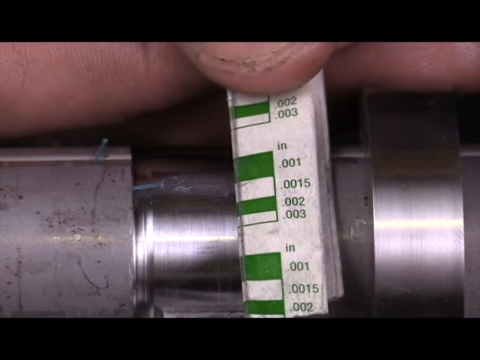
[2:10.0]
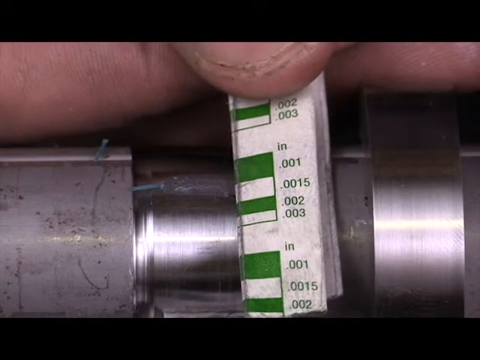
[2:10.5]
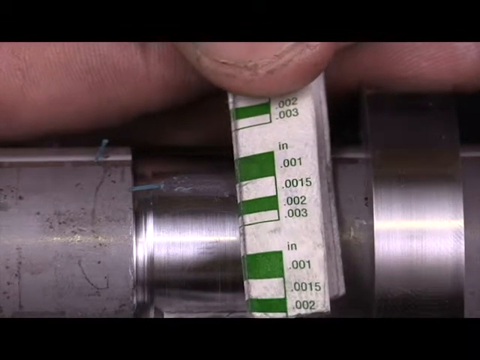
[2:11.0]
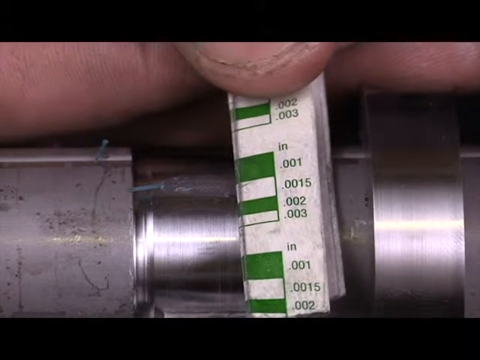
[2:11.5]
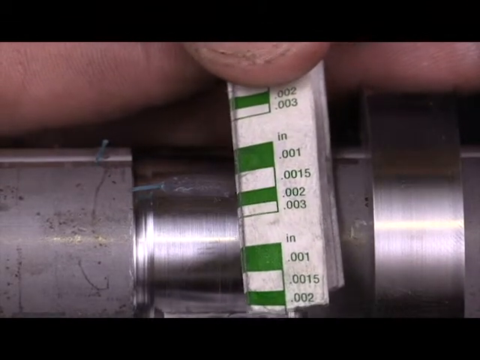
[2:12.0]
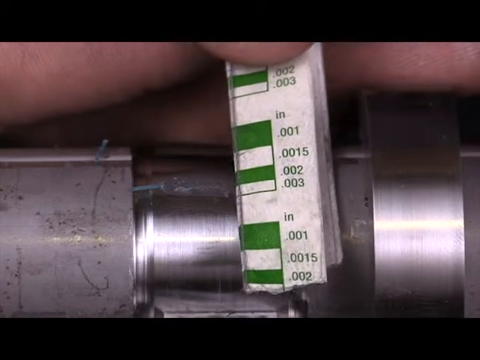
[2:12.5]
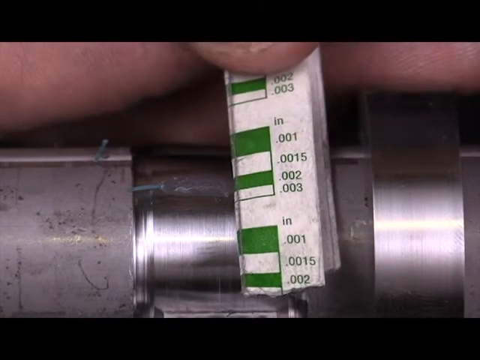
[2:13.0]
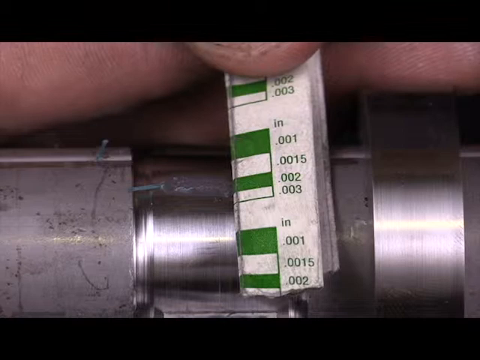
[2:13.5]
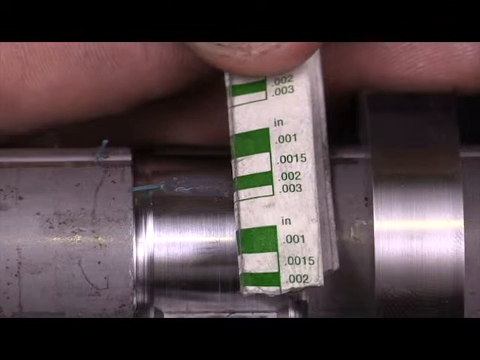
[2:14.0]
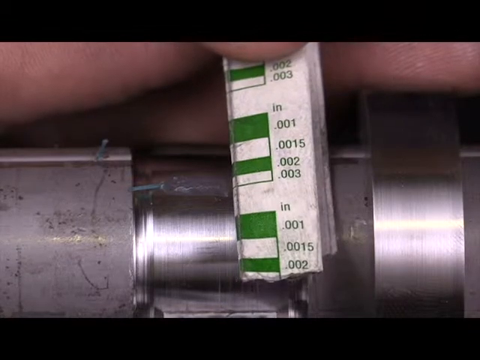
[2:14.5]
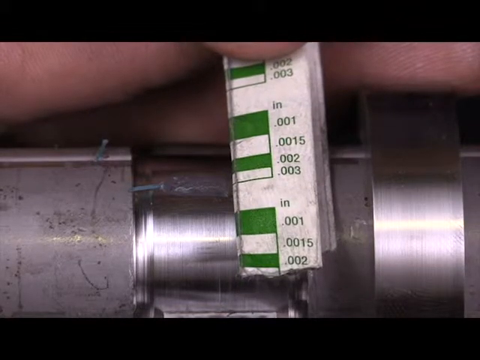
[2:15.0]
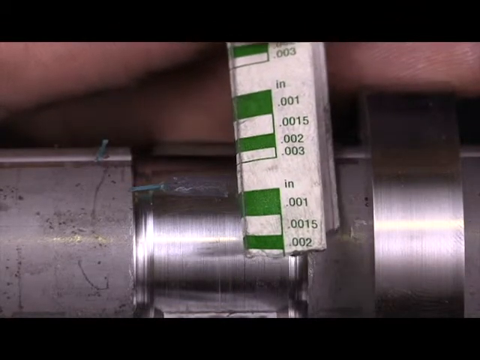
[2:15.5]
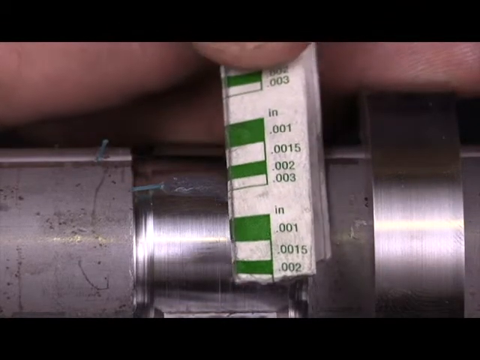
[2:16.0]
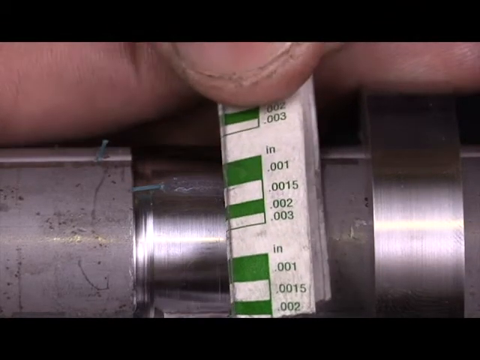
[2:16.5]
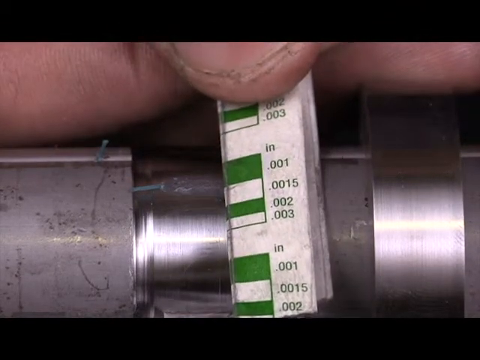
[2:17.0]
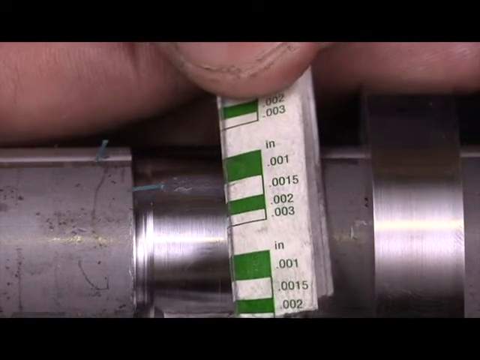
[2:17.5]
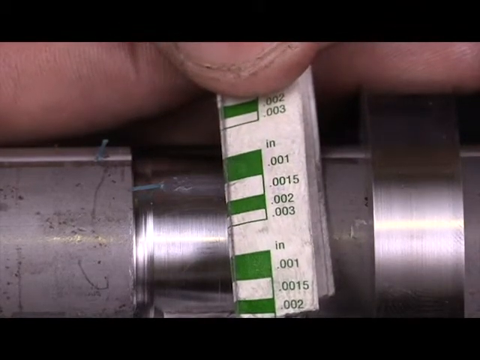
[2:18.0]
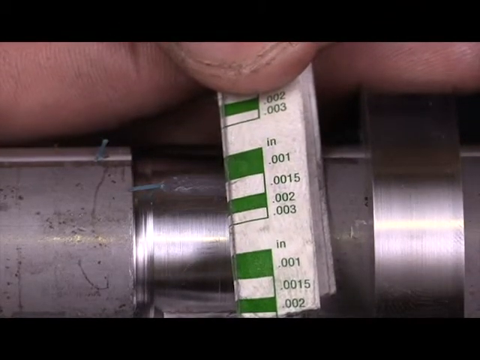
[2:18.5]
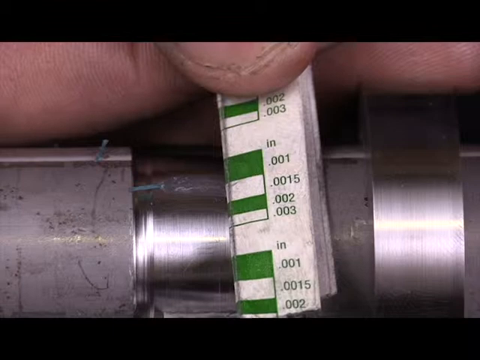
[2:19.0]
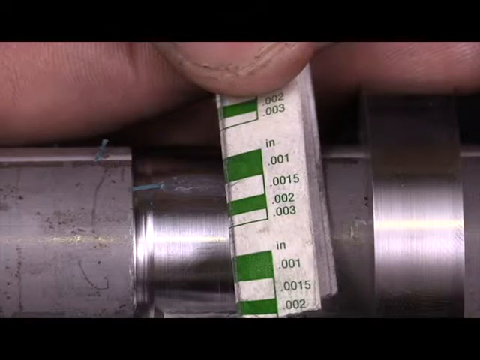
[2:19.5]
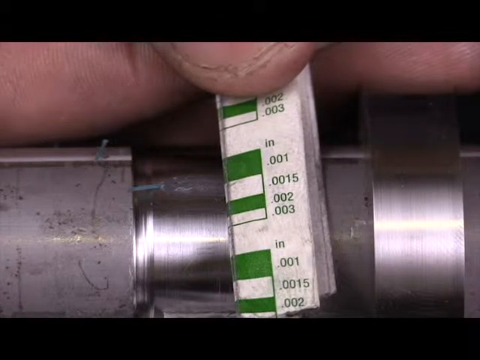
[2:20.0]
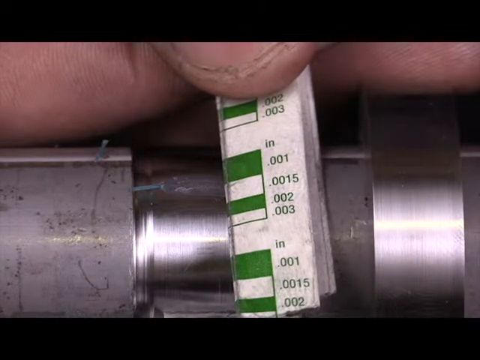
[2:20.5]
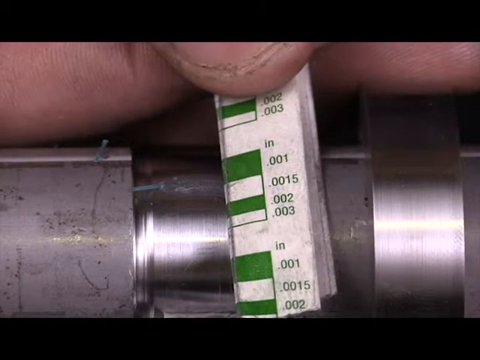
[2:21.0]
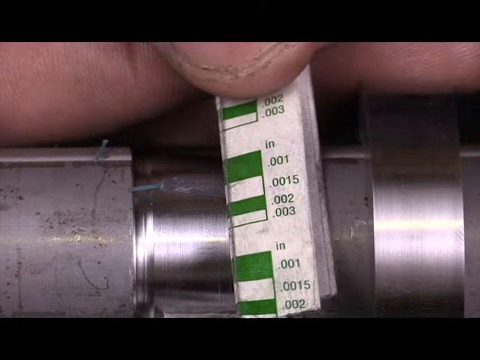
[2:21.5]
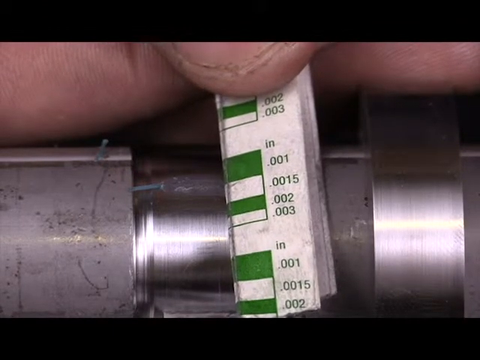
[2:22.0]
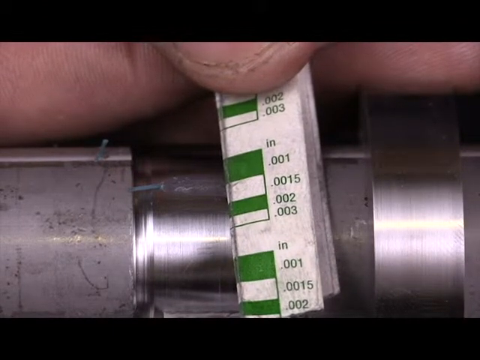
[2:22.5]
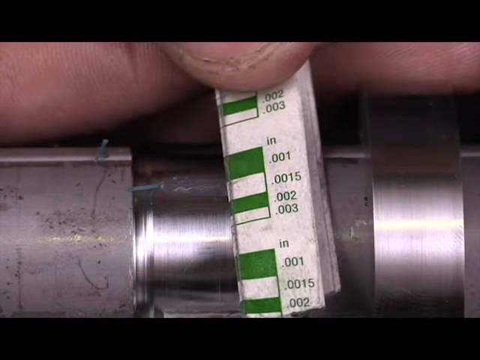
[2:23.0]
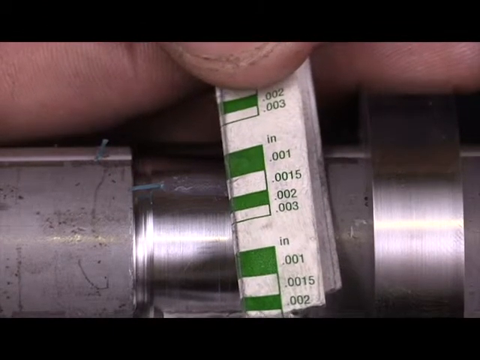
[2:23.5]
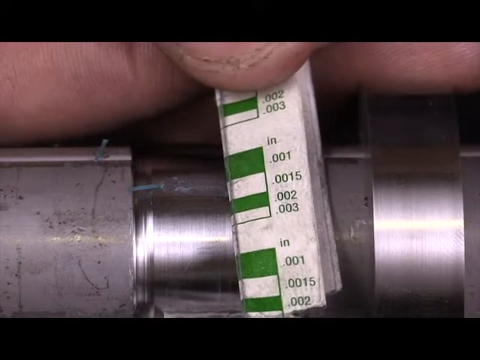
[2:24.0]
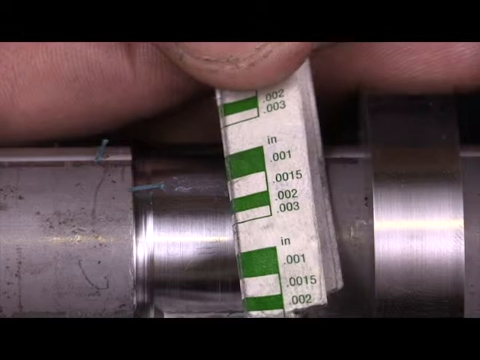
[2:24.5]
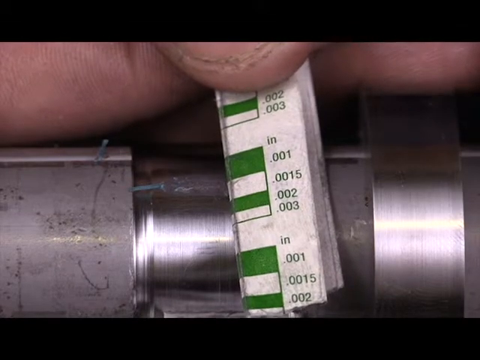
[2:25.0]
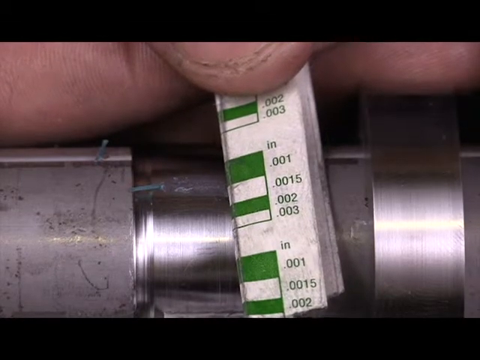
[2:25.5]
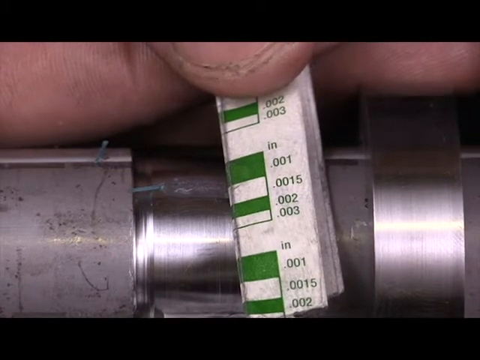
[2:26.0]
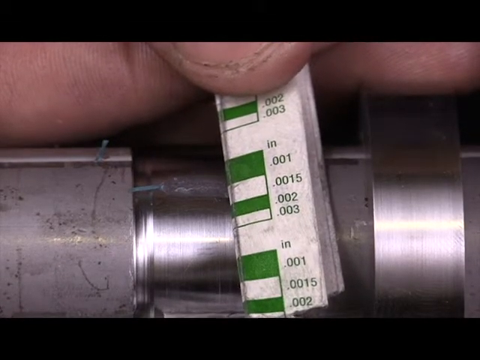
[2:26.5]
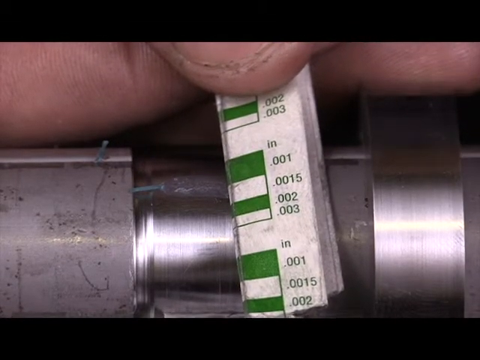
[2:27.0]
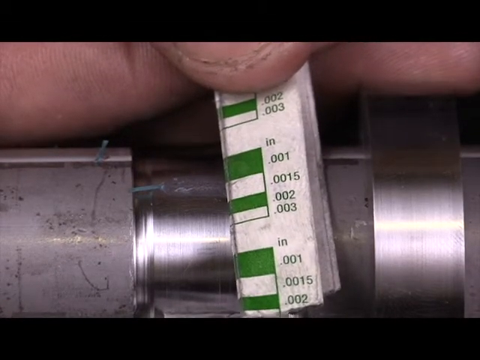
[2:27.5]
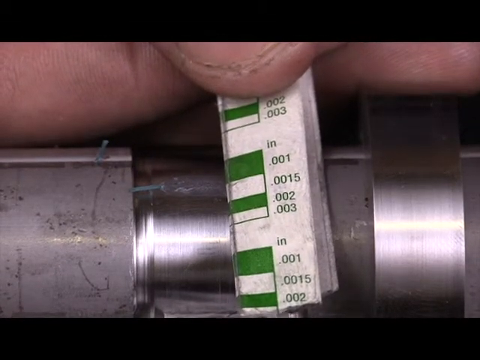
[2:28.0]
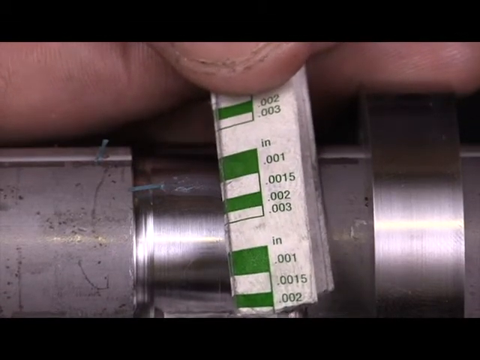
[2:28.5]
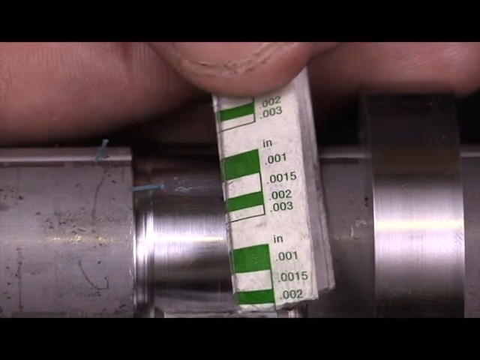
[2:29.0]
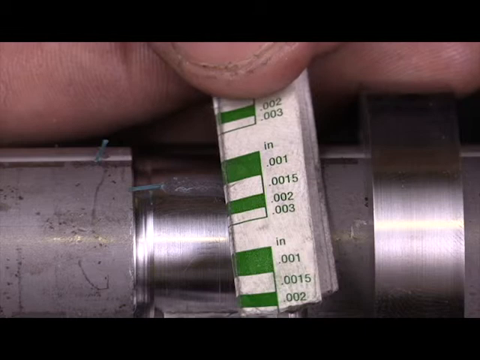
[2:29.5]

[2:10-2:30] An oblong cylinder with shiny chrome and a duller gray color is shown very zoomed in. A rectangular measuring device is placed vertically, up against the cylinder. White male fingers hold the measuring device flush against the cylinder, moving it up a little and then back down. The finger kind of pulses a little, with a bobbing motion that almost seems as if the person might be talking while doing this. The reflection of overhead lights is visible on the metal.